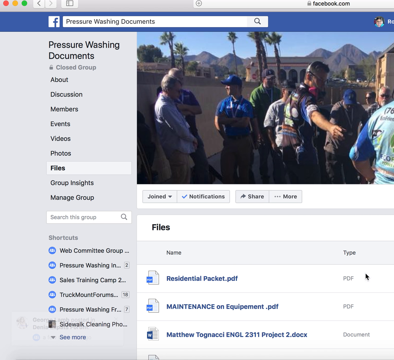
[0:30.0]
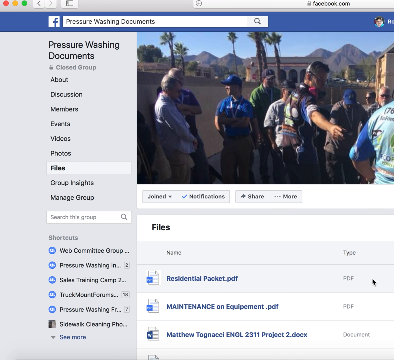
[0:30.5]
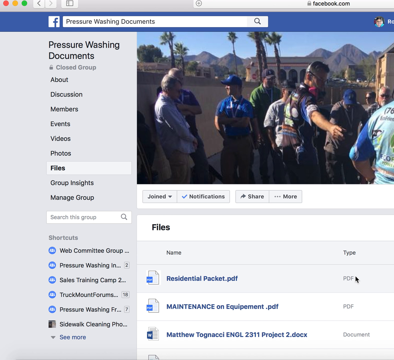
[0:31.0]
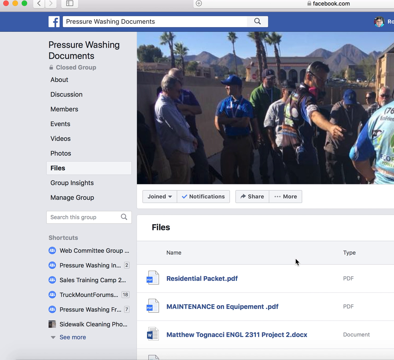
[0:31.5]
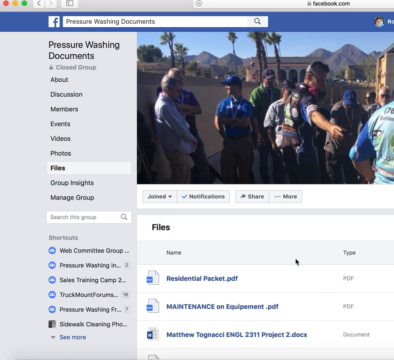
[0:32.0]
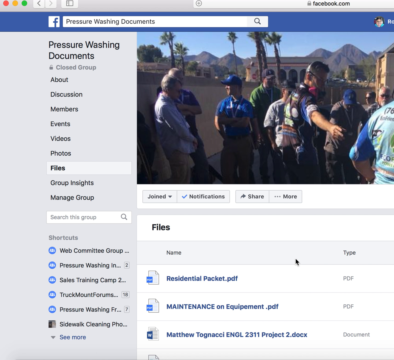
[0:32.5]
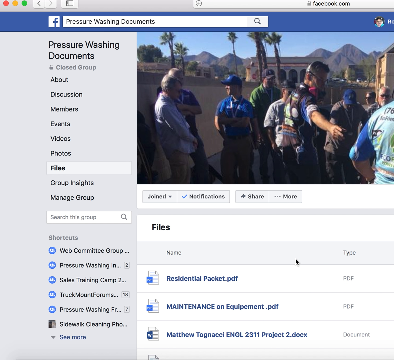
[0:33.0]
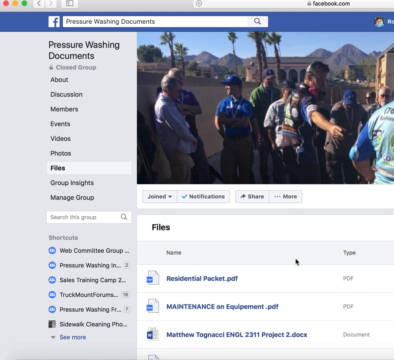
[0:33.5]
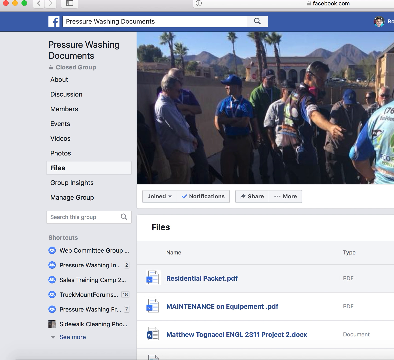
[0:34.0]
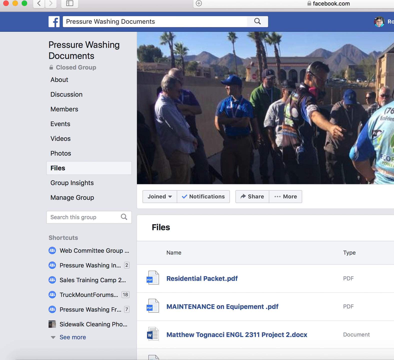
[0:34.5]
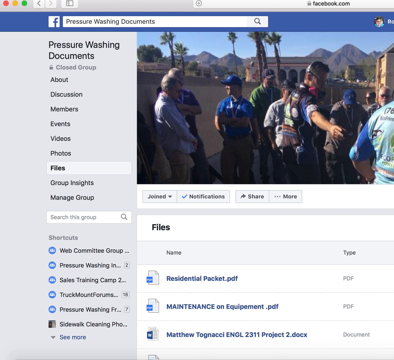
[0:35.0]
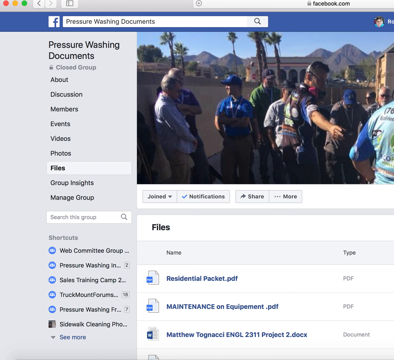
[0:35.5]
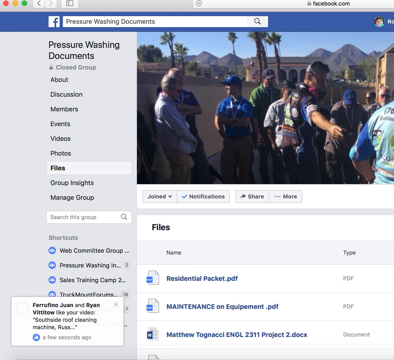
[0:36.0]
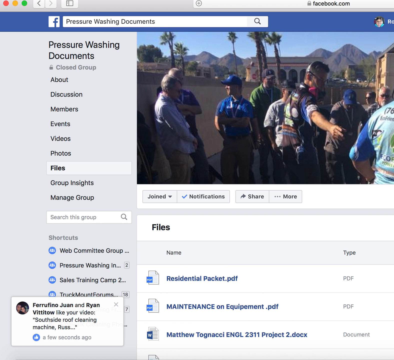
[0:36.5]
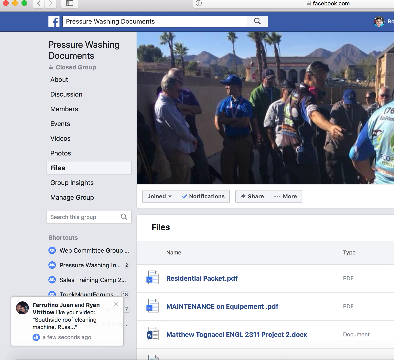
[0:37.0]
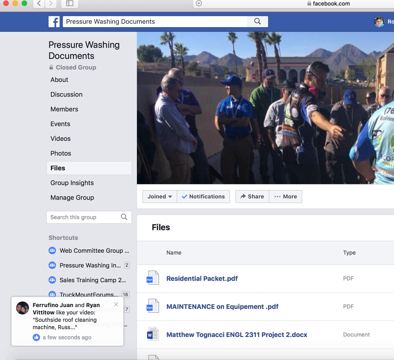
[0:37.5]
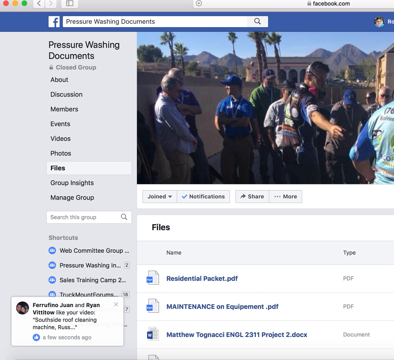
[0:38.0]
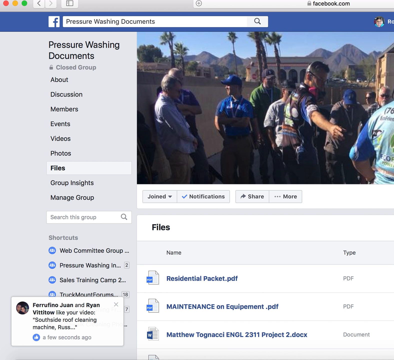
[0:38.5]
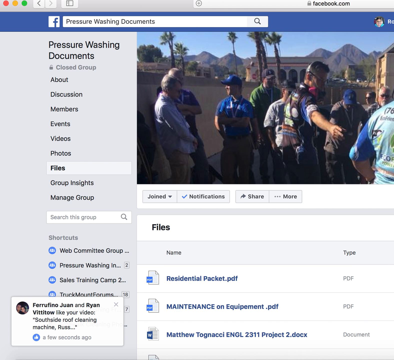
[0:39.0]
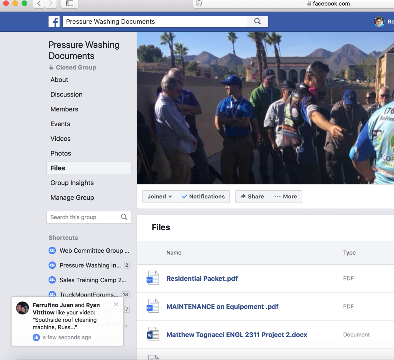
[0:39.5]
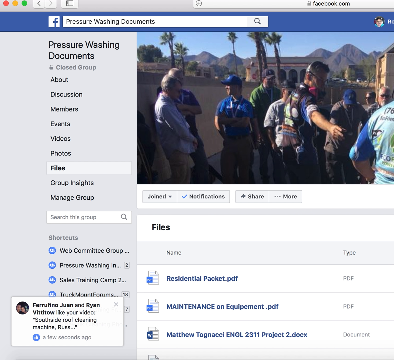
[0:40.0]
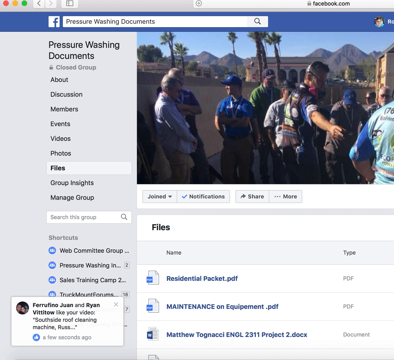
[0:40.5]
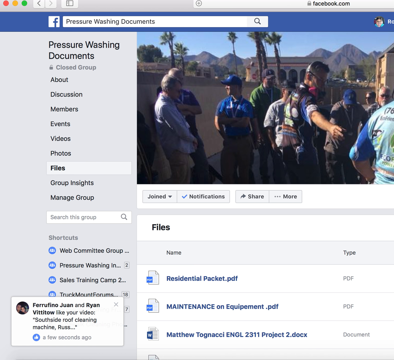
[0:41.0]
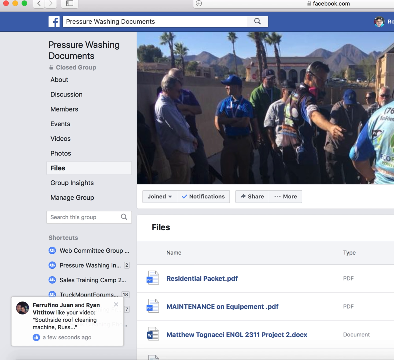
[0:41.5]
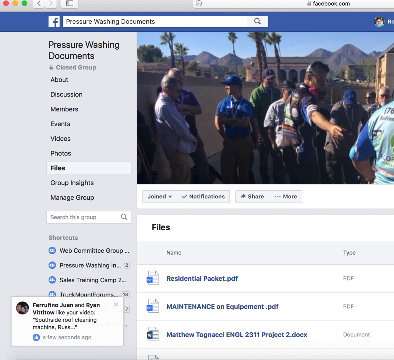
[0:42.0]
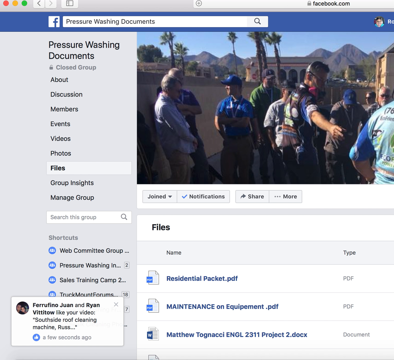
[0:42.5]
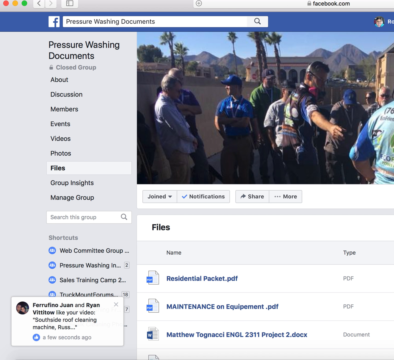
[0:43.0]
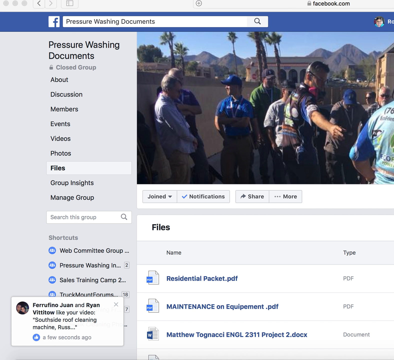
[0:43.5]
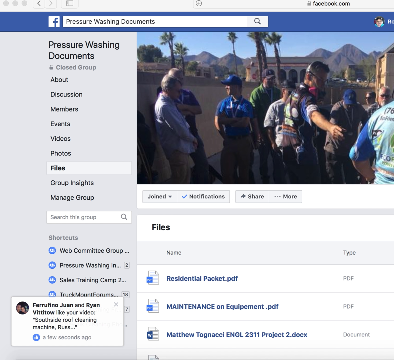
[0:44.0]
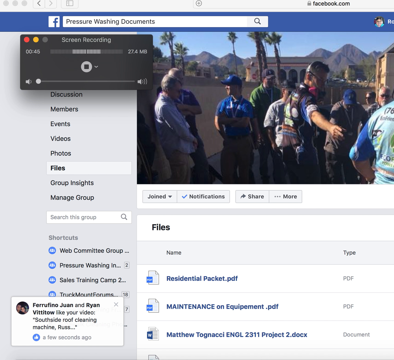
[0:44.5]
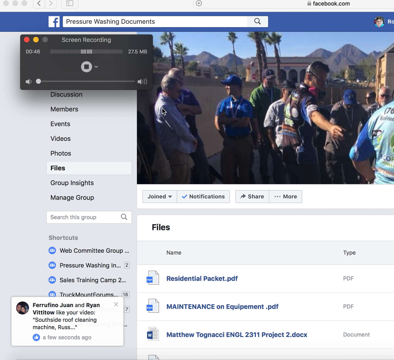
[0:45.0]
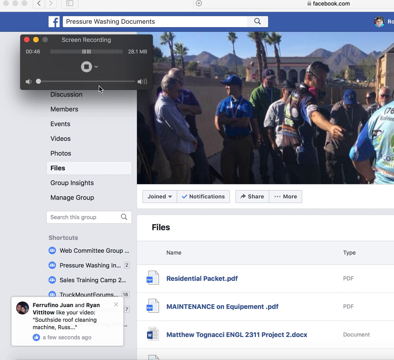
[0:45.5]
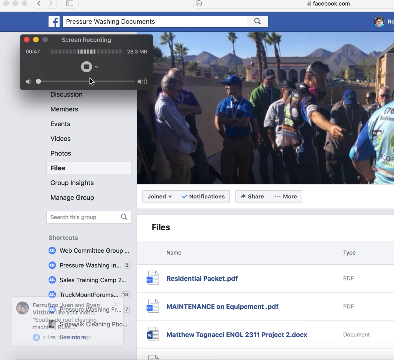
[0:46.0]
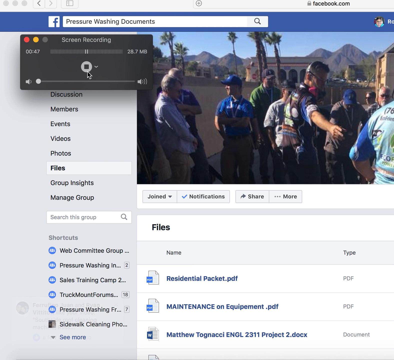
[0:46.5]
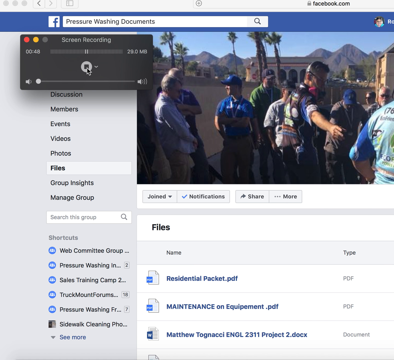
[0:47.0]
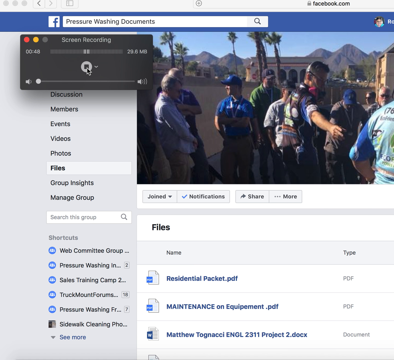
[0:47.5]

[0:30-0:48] A Facebook page reads "Pressure Washing Documents" and displays a group of files, including "Residential Packet PDF," "Maintenance on Equipment PDF," and one listed as a document with a man named Matthew's name. At the top of the page is an image of a group of men outside next to a wall; they appear to be in a more desert-like climate, with mountains in the background, palm trees, and daylight. A mouse cursor moves around the page, goes off screen, and then looks like it clicks on someone's name, and something mentioning Fariflino Juan and Ryan Vitro pops up. After that, the cursor pulls up a small screen recording portion and clicks on it at the very center.